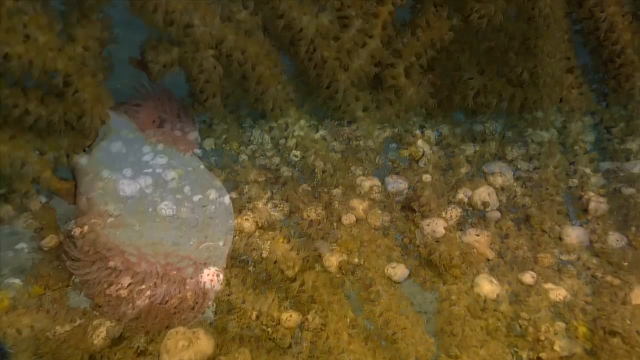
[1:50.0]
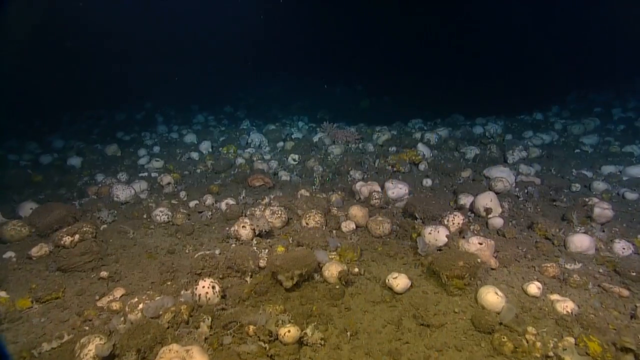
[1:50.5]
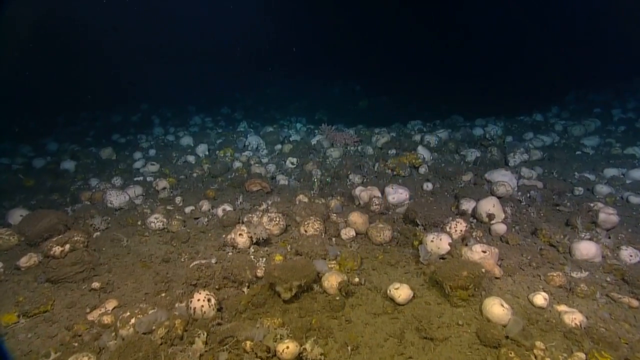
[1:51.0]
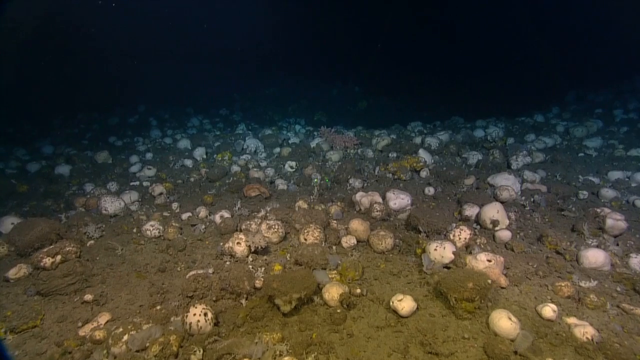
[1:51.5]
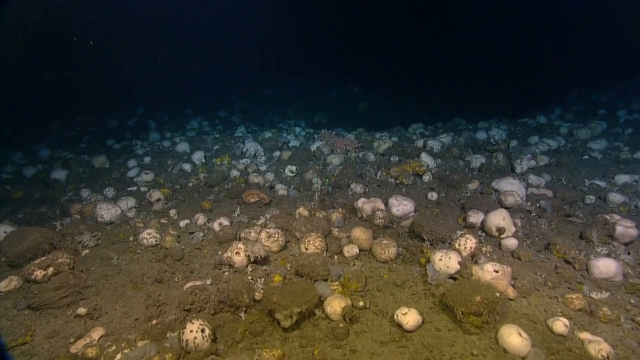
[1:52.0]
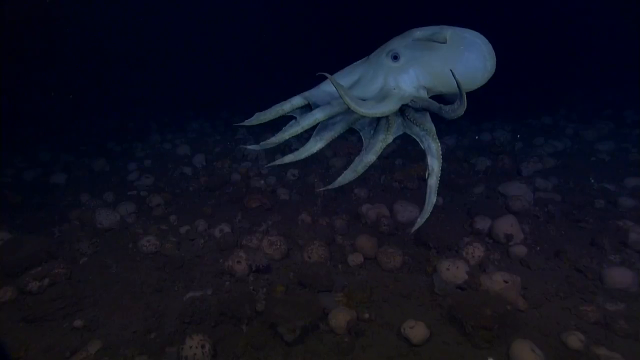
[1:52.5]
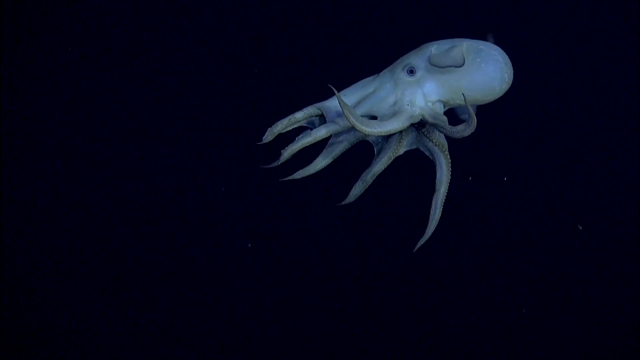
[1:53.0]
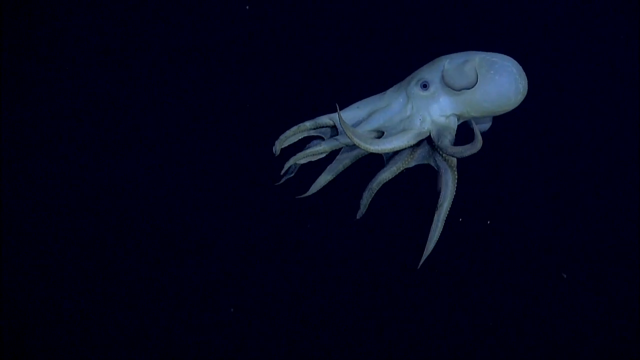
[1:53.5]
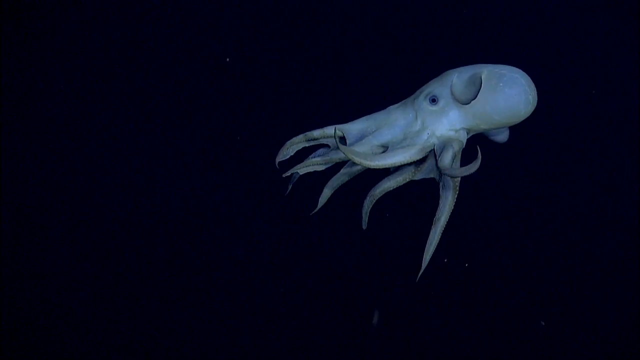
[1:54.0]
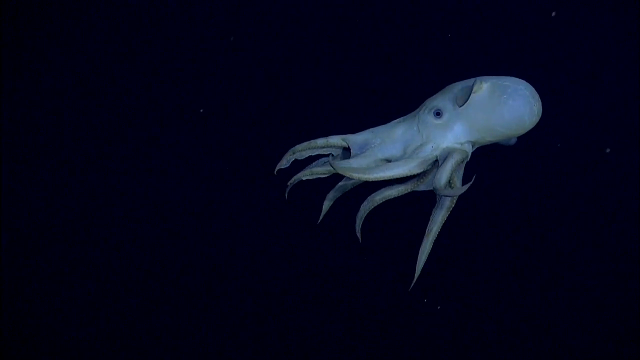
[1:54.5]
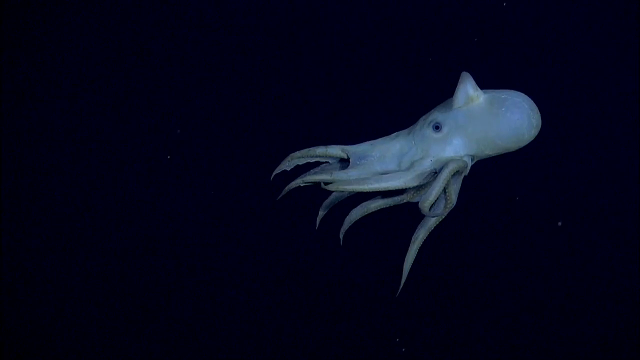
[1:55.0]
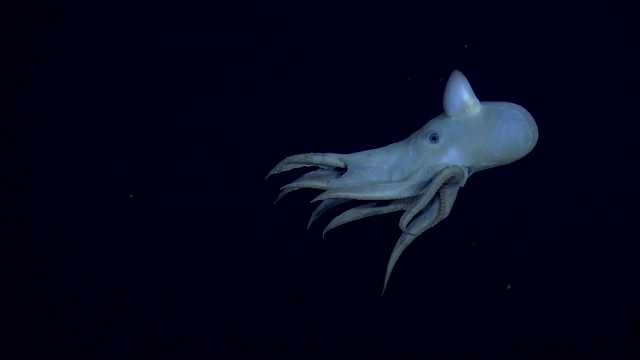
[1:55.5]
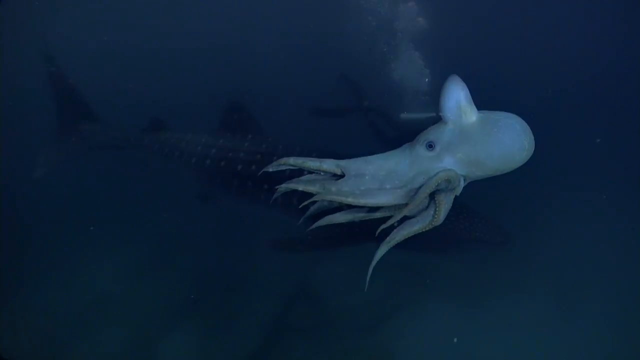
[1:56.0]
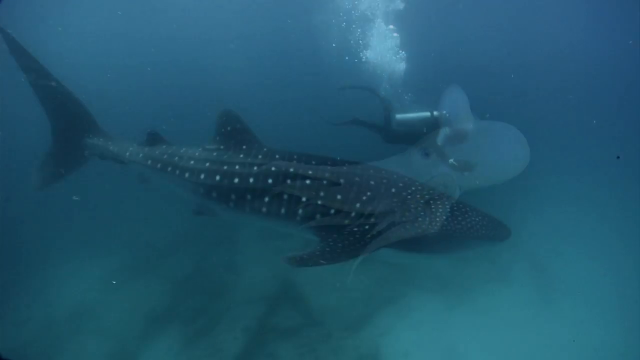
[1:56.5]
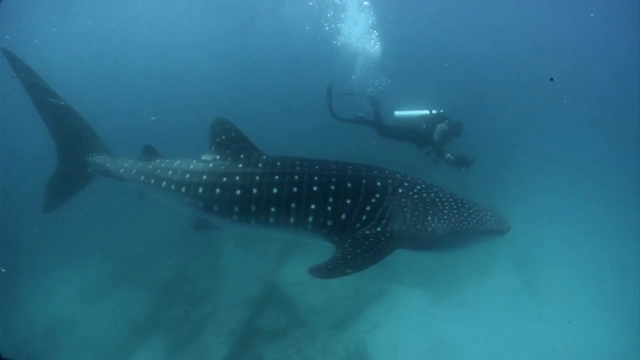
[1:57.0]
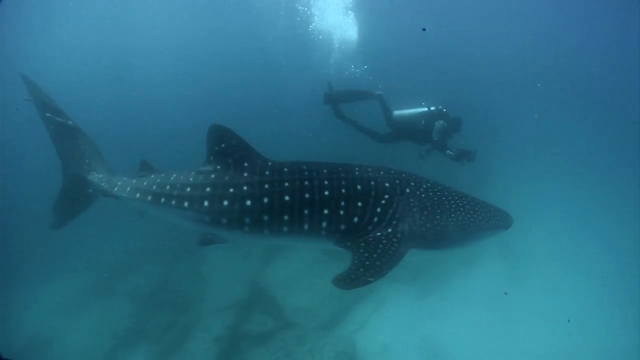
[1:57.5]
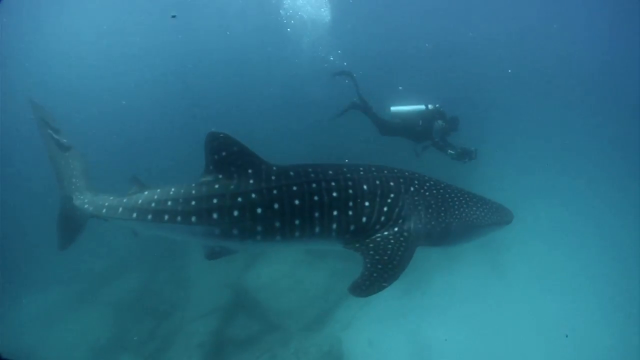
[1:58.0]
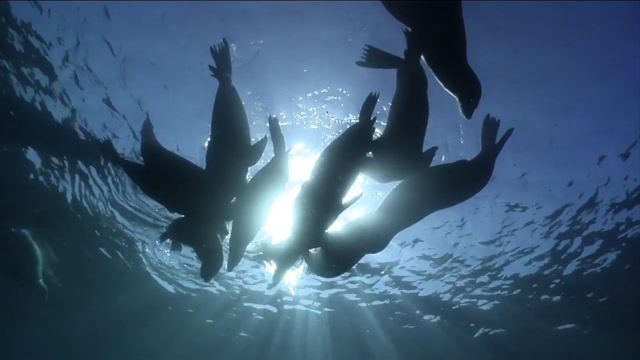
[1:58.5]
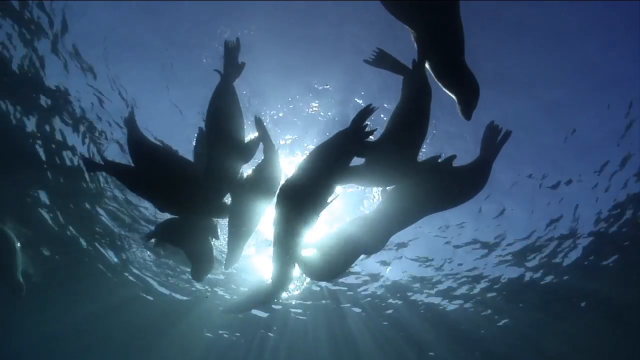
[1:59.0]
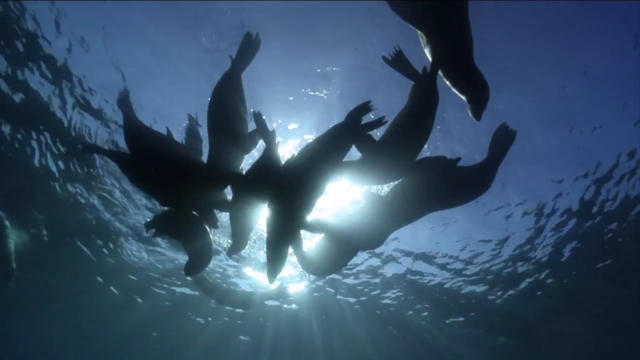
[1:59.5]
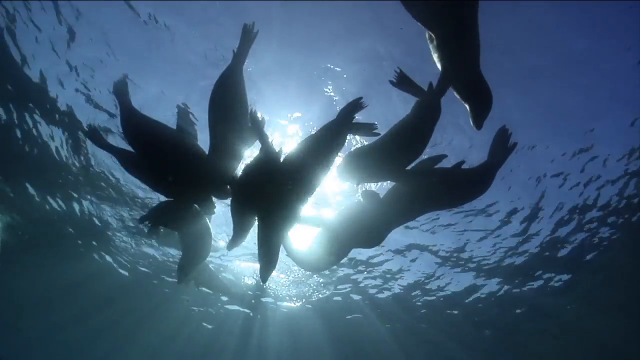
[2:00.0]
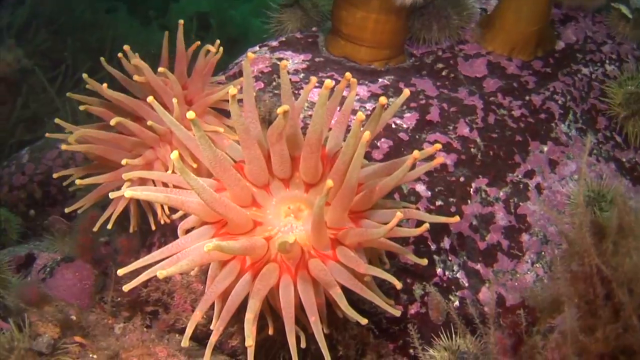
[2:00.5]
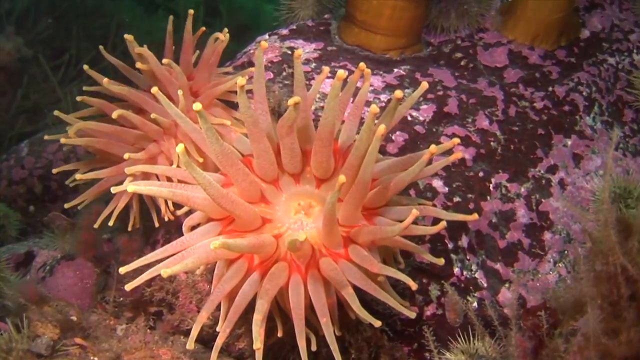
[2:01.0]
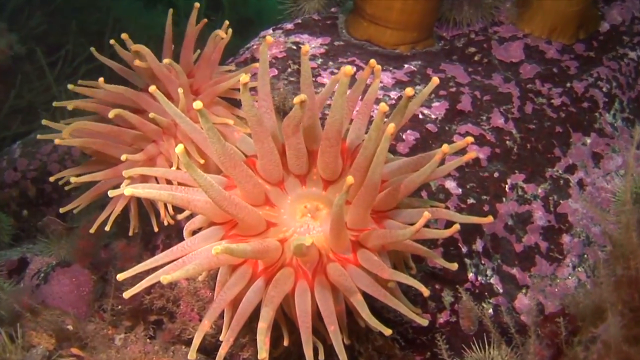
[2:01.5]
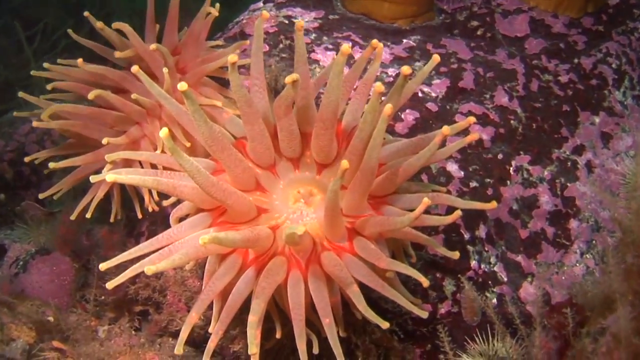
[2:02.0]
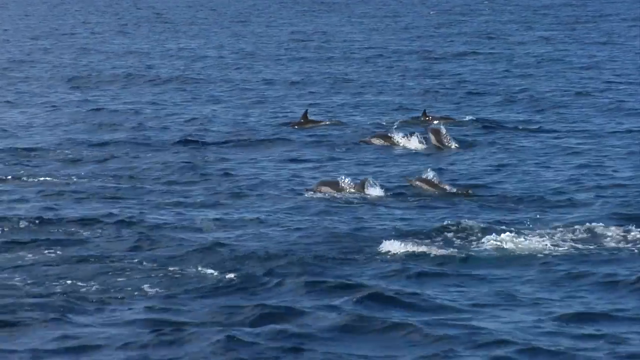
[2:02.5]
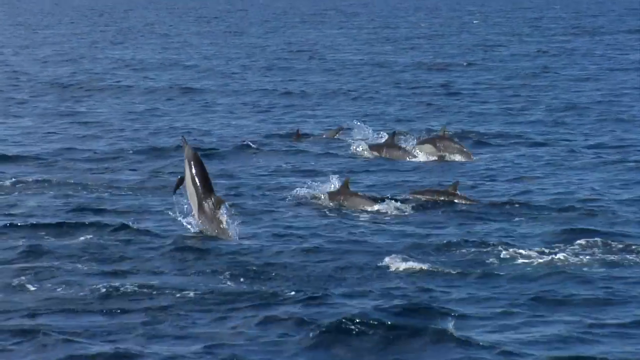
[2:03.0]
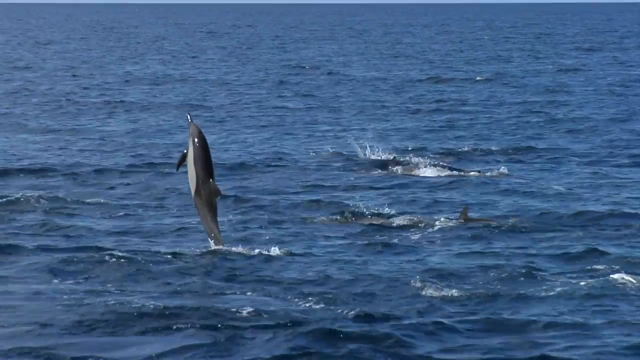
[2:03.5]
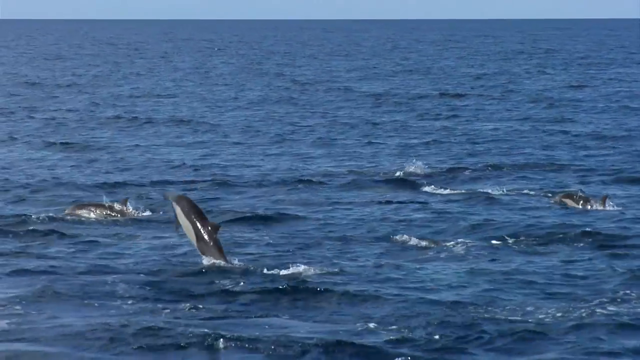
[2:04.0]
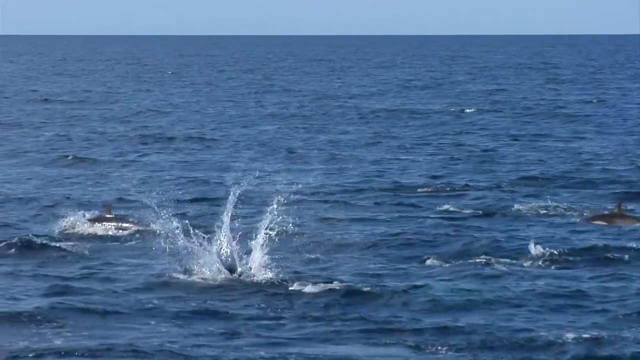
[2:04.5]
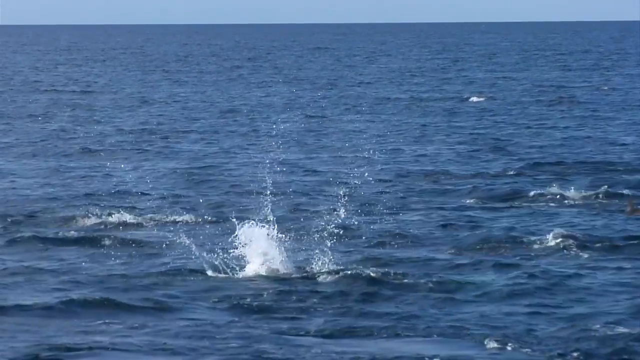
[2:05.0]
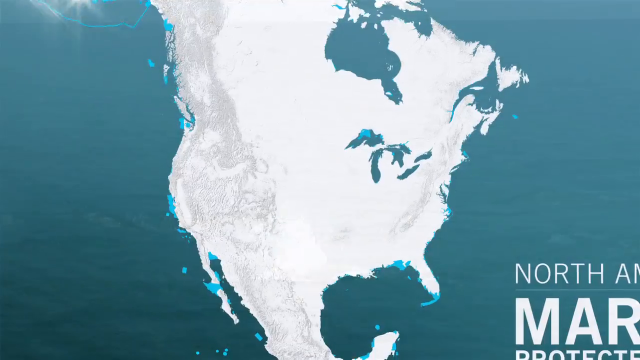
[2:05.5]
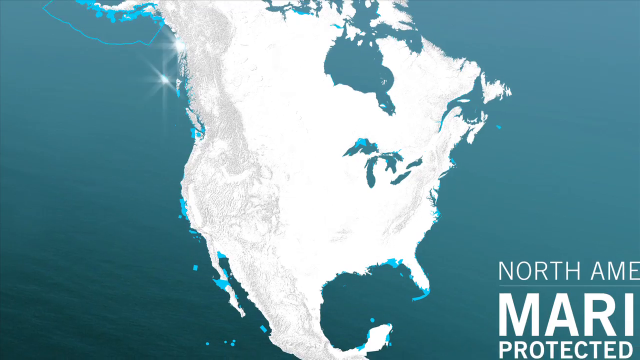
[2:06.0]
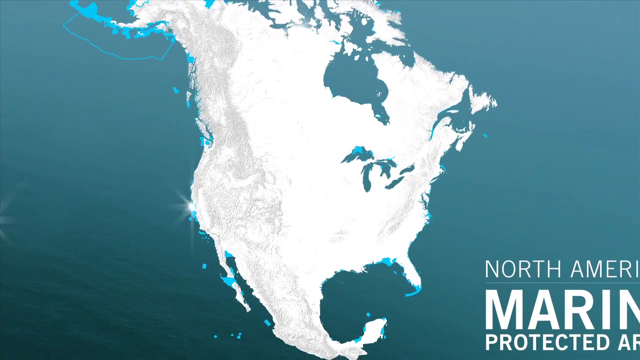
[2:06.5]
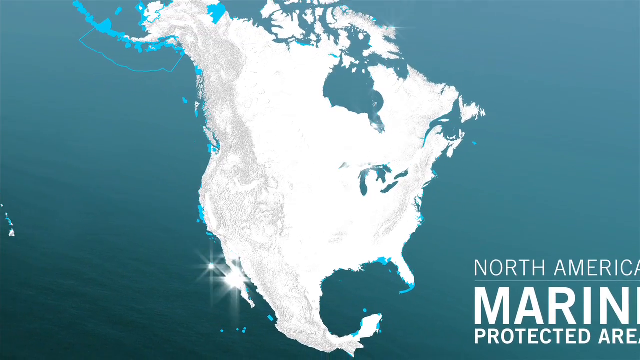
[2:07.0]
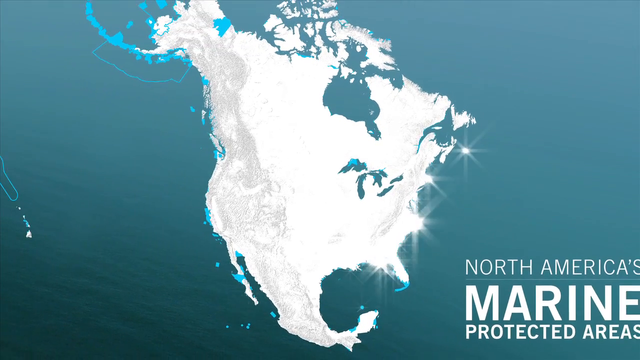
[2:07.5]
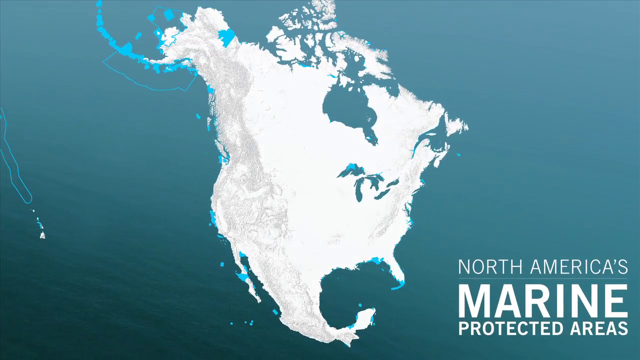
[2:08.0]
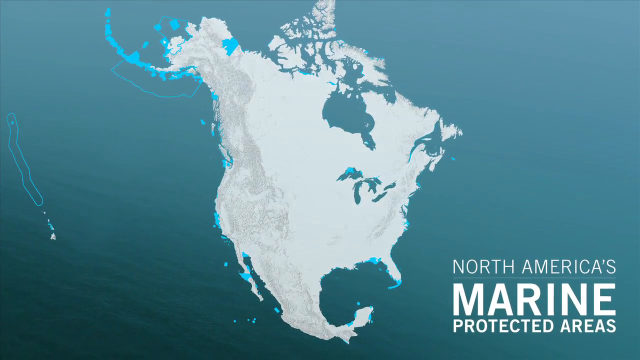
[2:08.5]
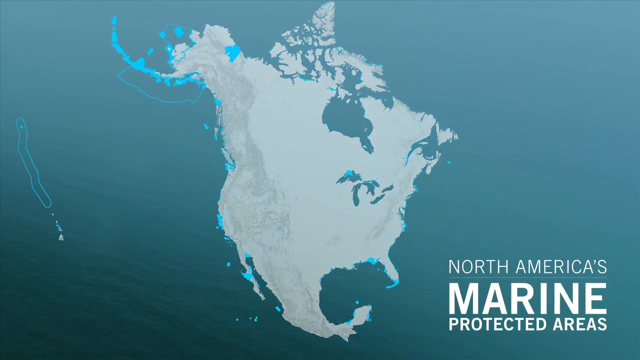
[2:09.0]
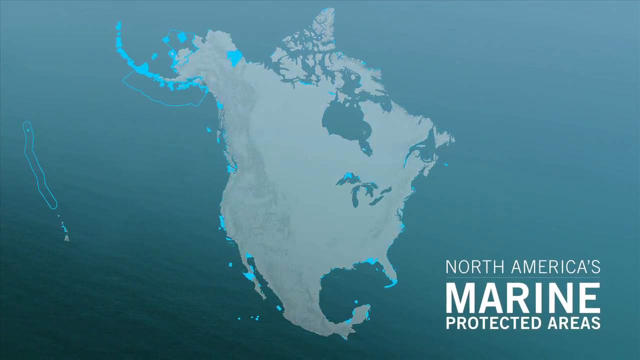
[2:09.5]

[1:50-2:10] Footage of Gully Marine Protected Area continues with what look like rocks but are possibly some type of sea creature, perhaps sea squashes. A blue octopus swims in the sea. A shark with dots all over it, apparently a tiger shark, follows. Seals swim at the top again. Another squishy-looking sea creature has tentacles coming out of it and looks almost like a flower. Dolphins jump out of the water, swimming somewhere. The zoomed-out map of the North American continent appears again, with some places shaded in blue, and in the very right corner are the words "North America's protected marine areas."